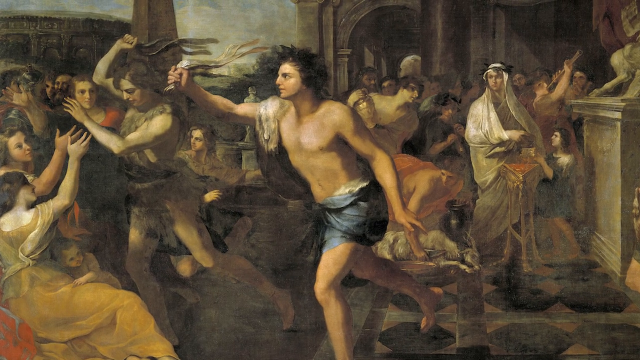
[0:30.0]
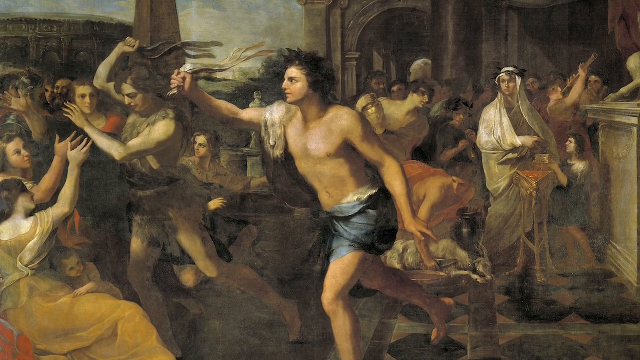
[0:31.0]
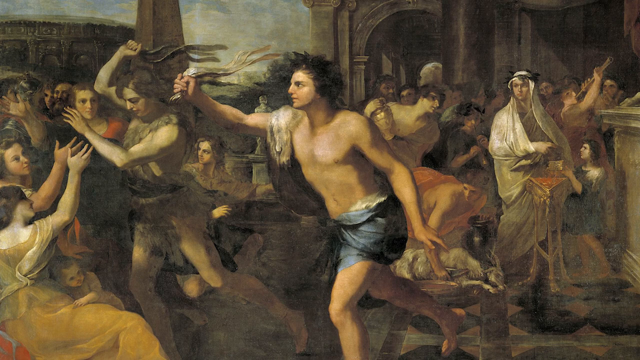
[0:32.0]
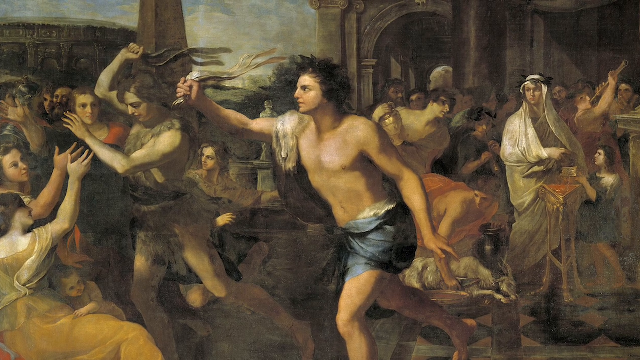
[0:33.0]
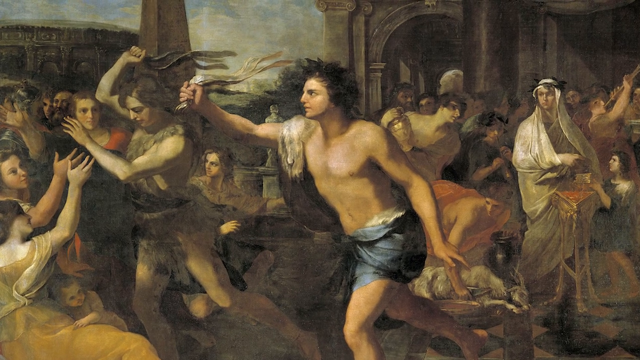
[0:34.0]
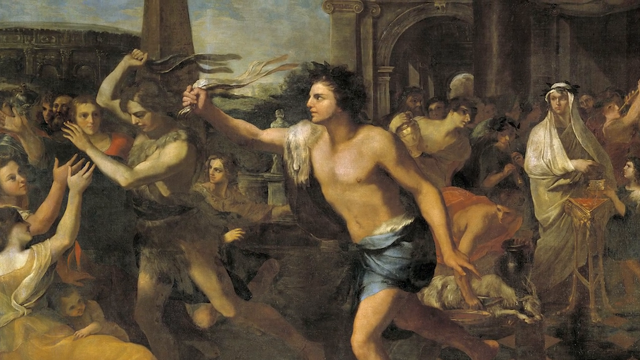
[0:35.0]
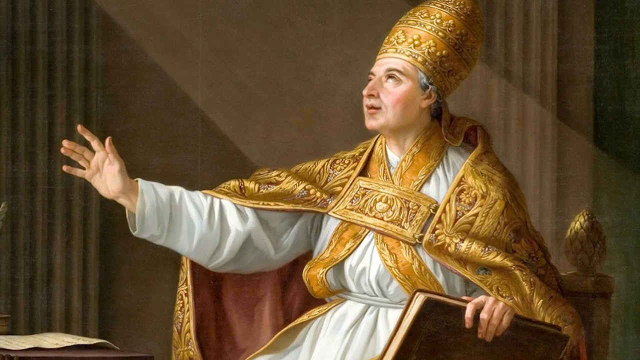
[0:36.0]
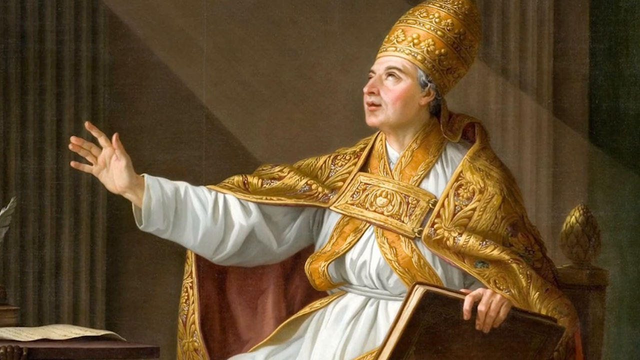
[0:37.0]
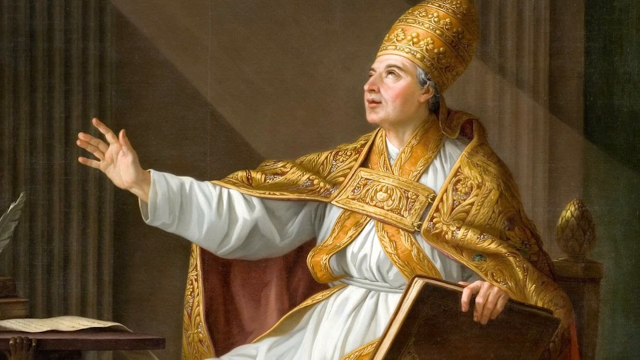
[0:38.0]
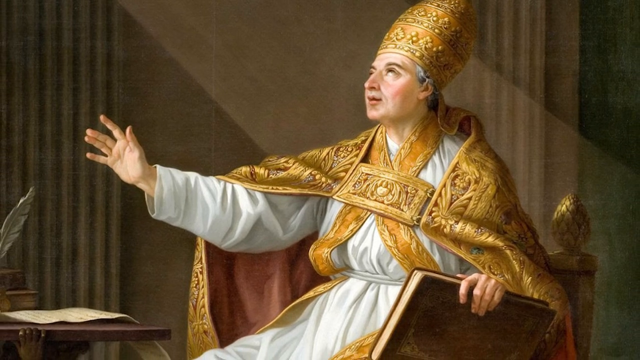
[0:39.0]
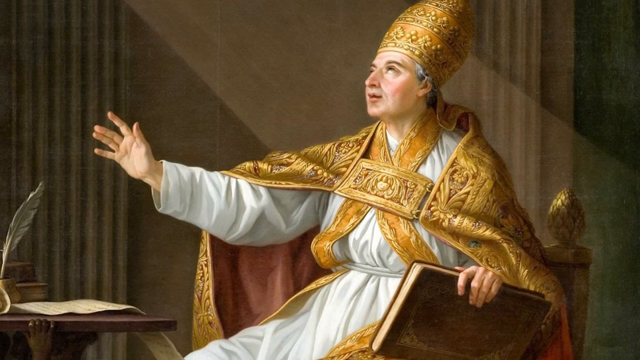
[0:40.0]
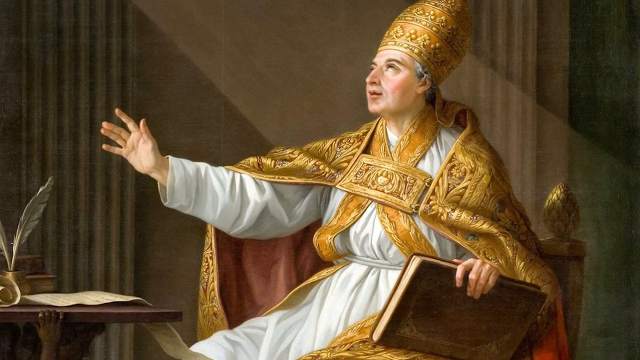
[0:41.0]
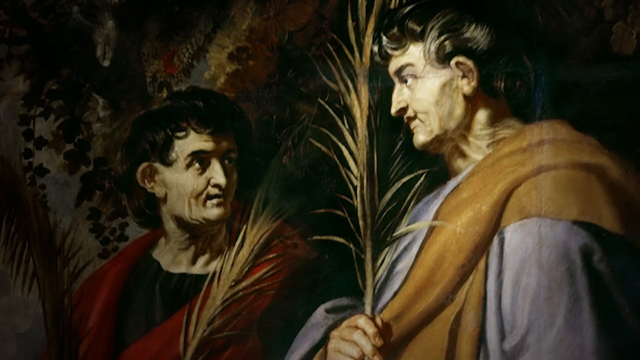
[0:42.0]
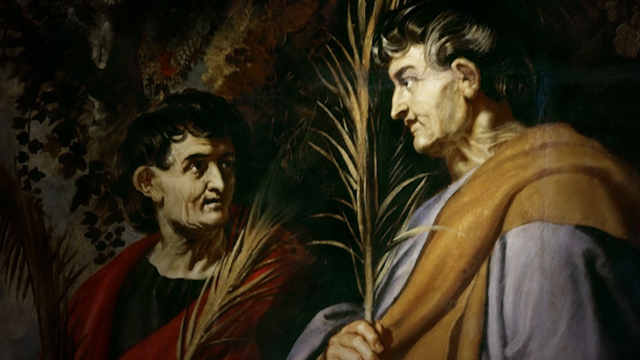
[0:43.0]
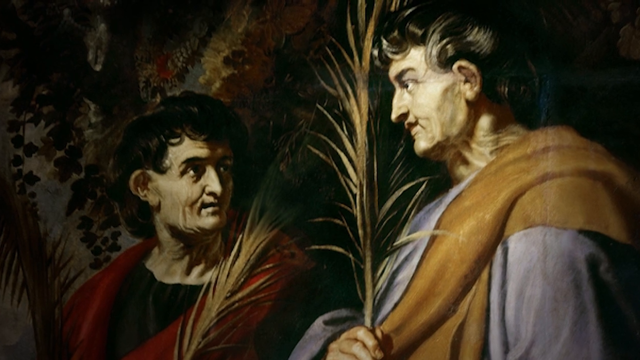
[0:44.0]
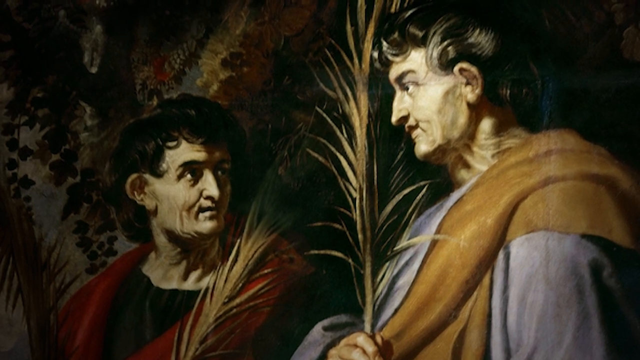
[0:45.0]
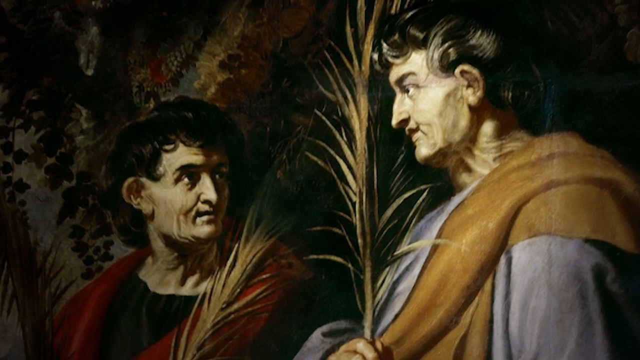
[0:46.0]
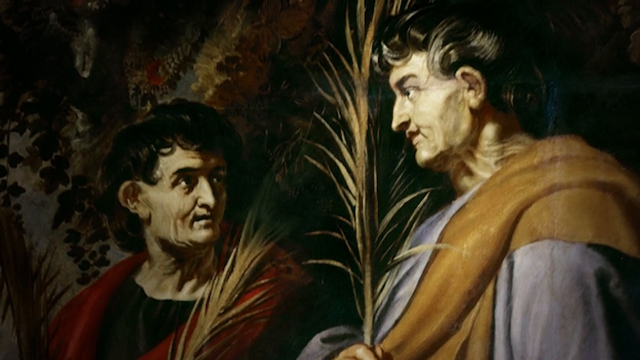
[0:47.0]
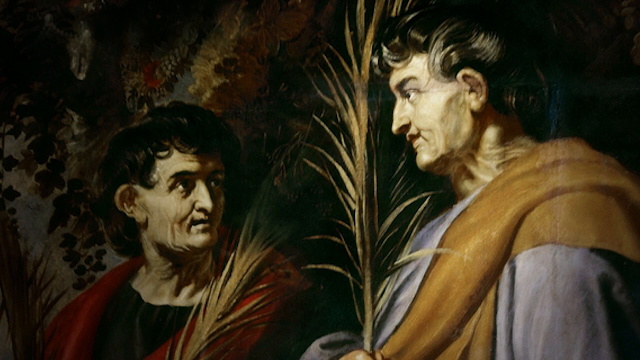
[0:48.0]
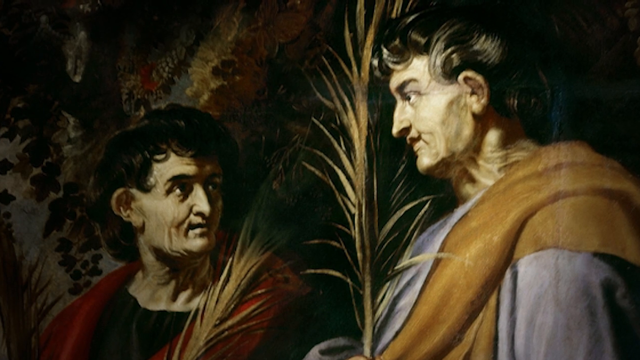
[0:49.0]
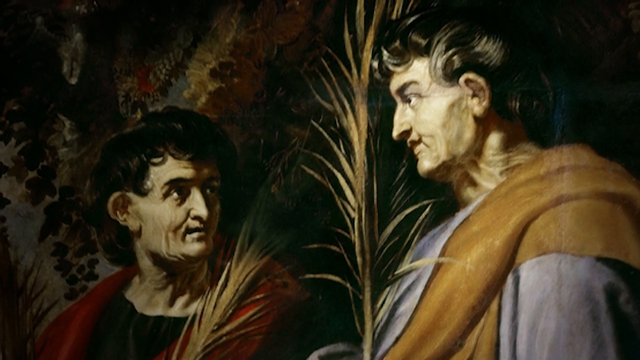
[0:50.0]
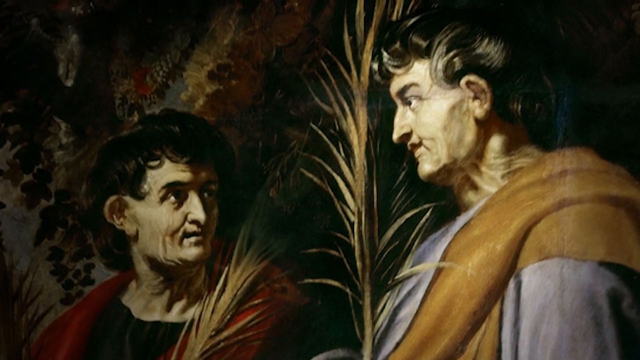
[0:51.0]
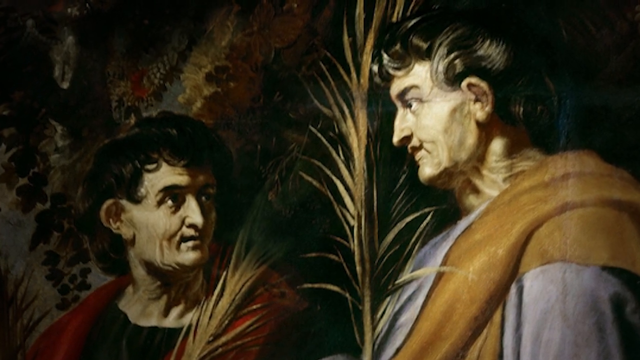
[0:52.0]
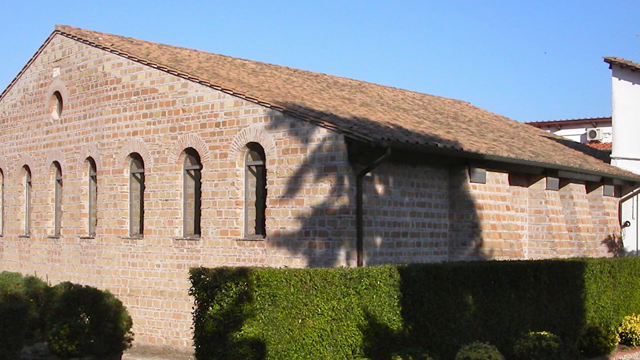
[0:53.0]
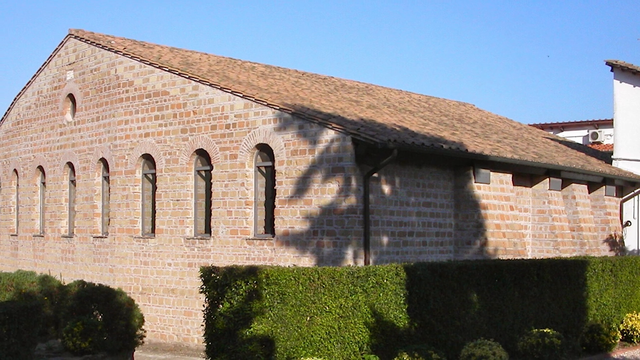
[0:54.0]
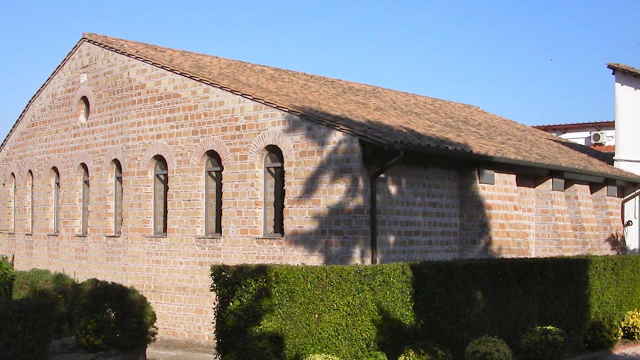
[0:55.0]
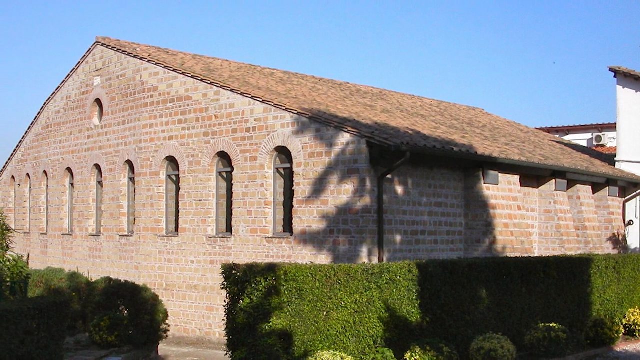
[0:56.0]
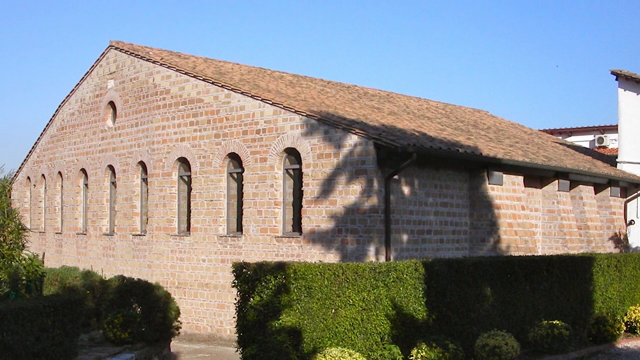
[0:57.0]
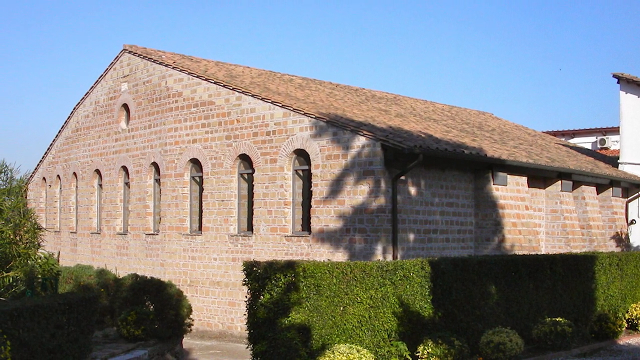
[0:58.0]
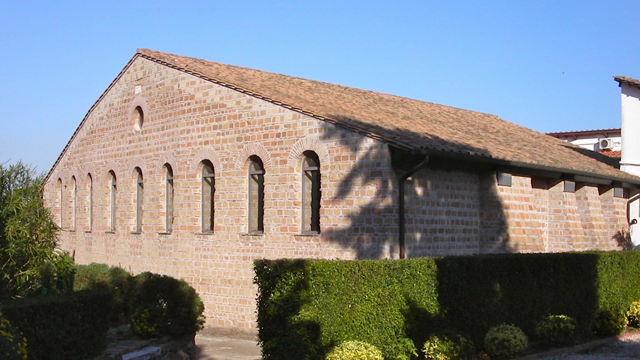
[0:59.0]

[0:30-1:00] A series of oil painting images is shown. The first shows a shirtless man standing on one leg with one arm raised, with a large group of people in the background behind him, some sitting on the floor and some standing. In his right hand he holds something that could be a whip of some sort or something else to hit someone with, and a blue piece of fabric is around his waist. In the bottom left corner, a woman in a yellow dress has a baby on her lap. The next image shows a religious man, perhaps a pope or a bishop, wearing a white robe with a gold cape and holding a book. Next come two men looking at each other and holding plants. The final image is a photo of a brick building that is potentially a church.